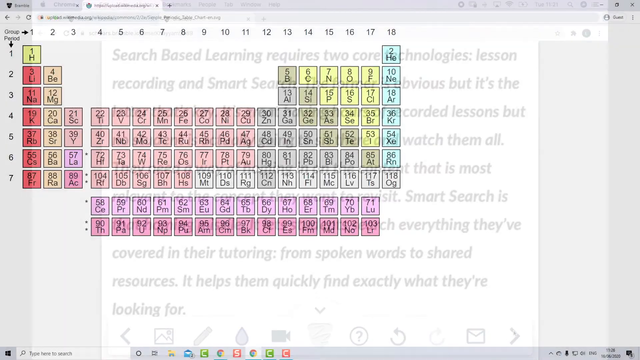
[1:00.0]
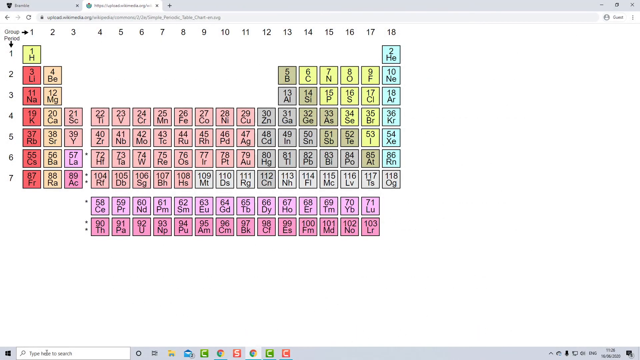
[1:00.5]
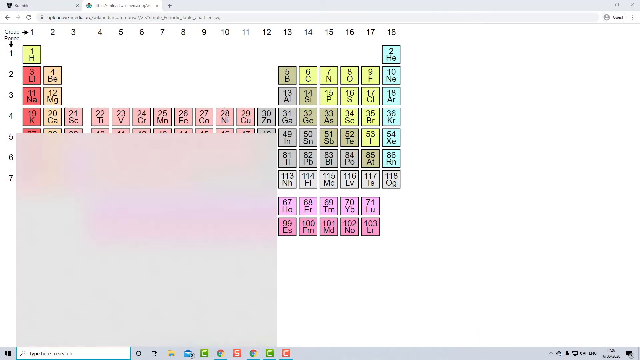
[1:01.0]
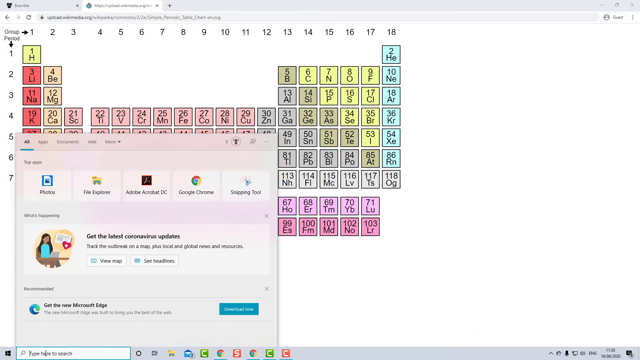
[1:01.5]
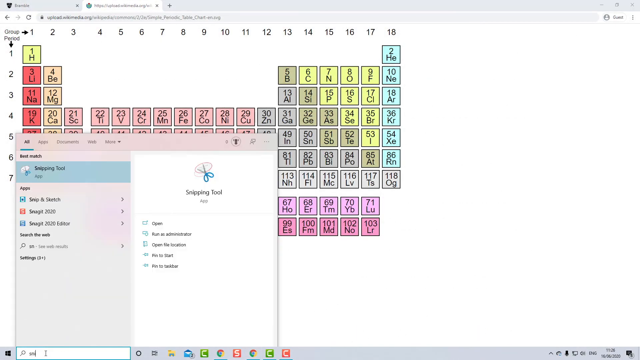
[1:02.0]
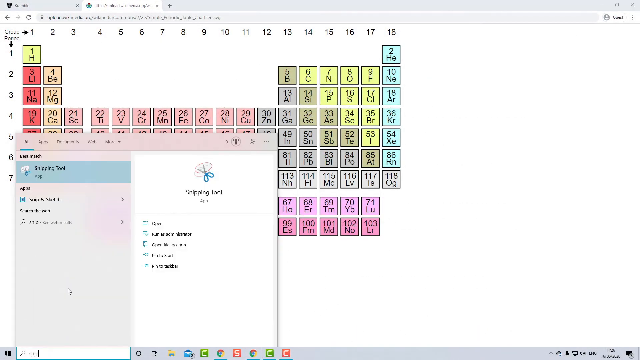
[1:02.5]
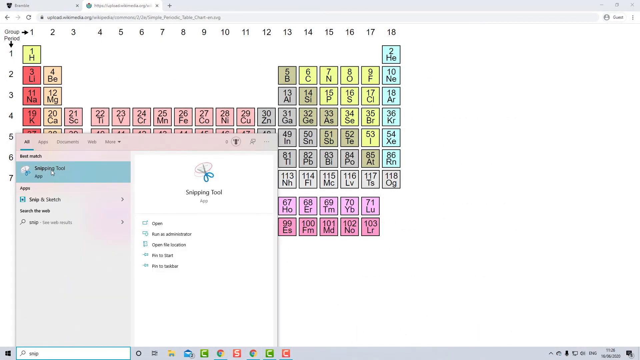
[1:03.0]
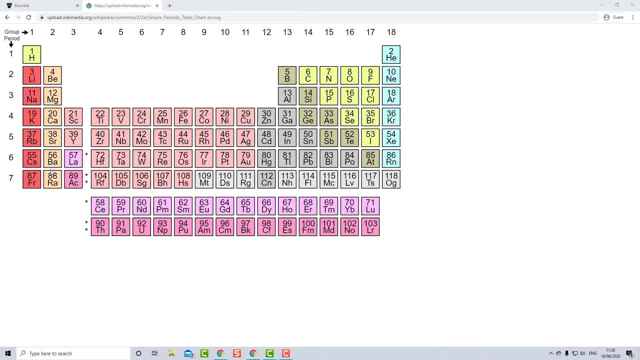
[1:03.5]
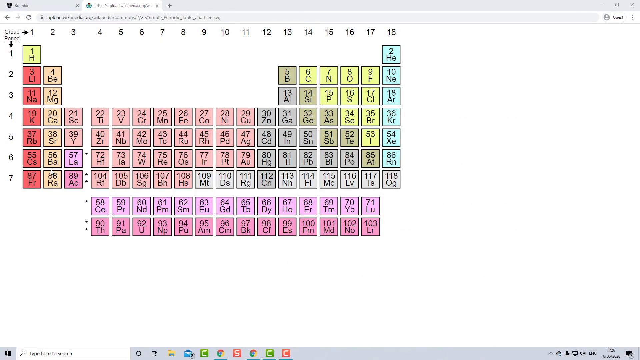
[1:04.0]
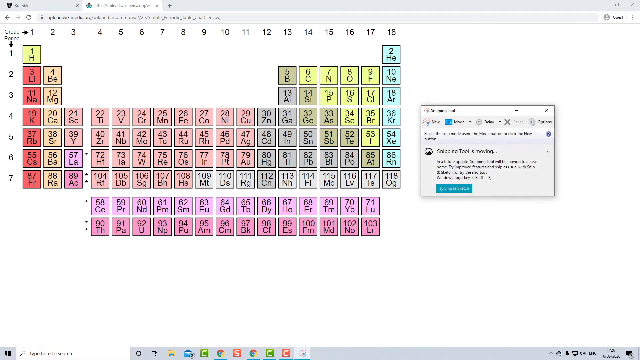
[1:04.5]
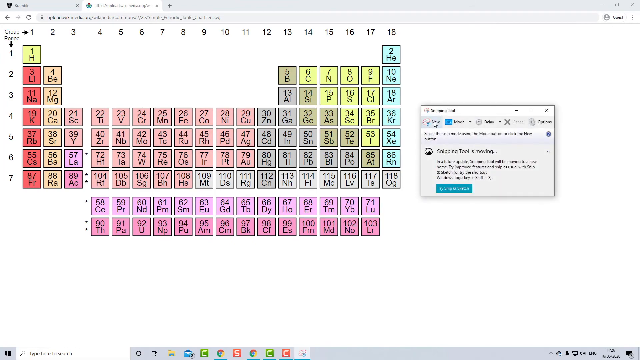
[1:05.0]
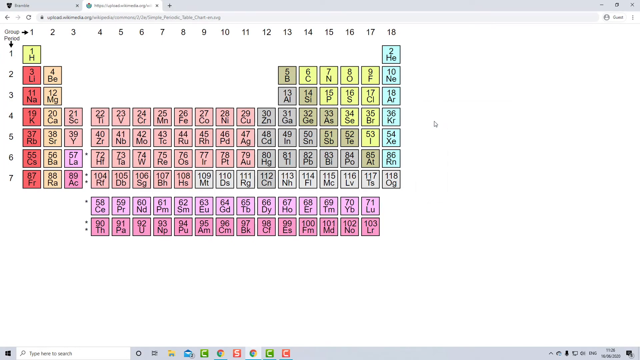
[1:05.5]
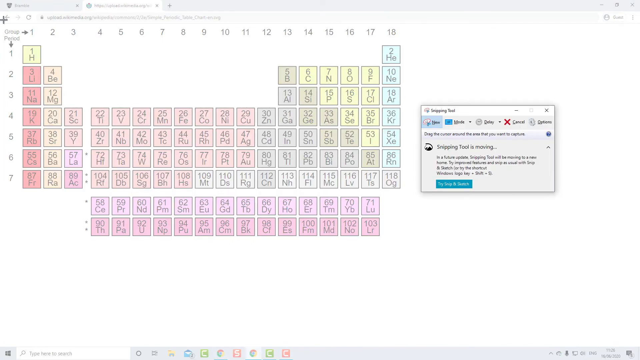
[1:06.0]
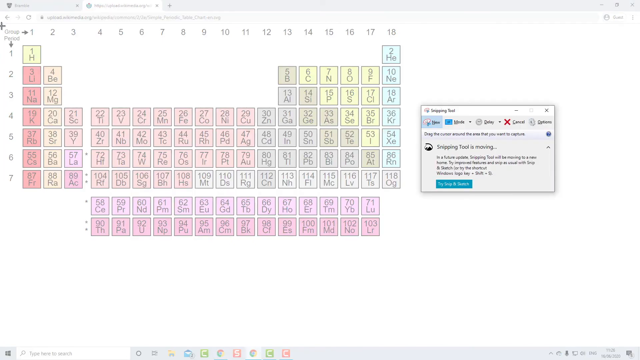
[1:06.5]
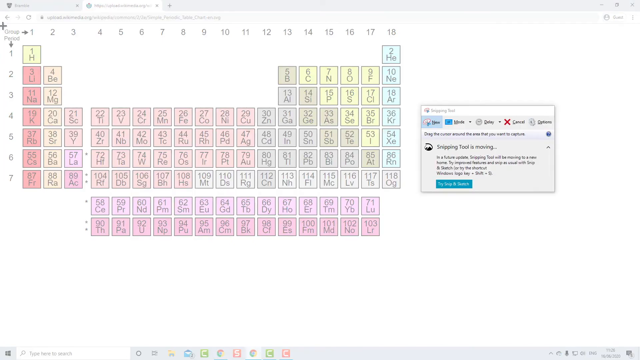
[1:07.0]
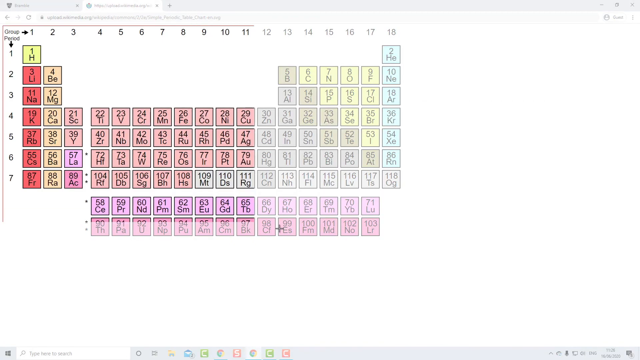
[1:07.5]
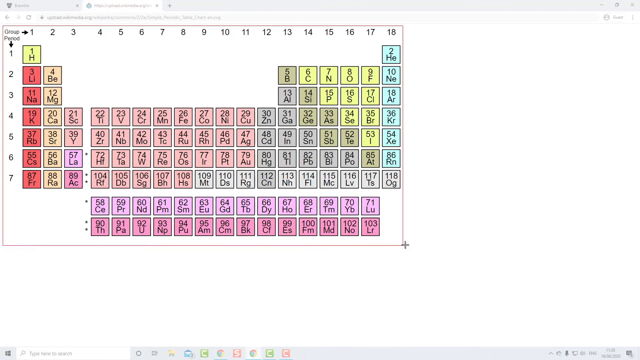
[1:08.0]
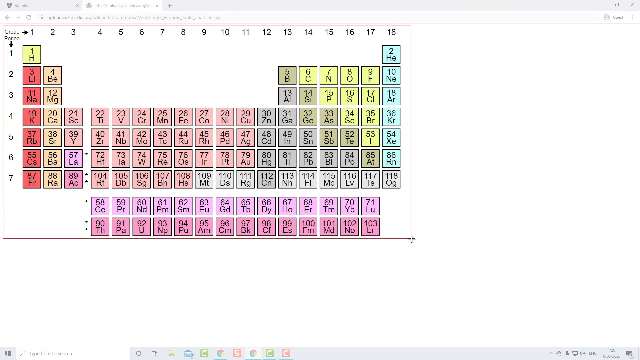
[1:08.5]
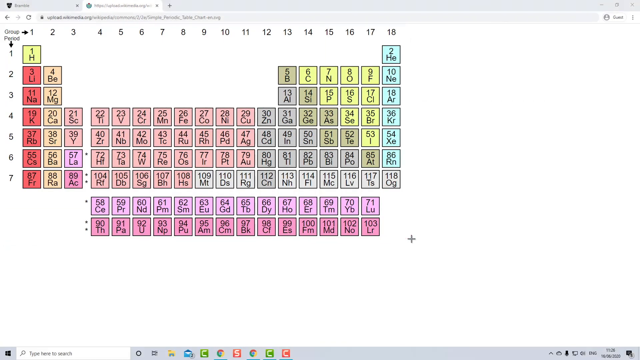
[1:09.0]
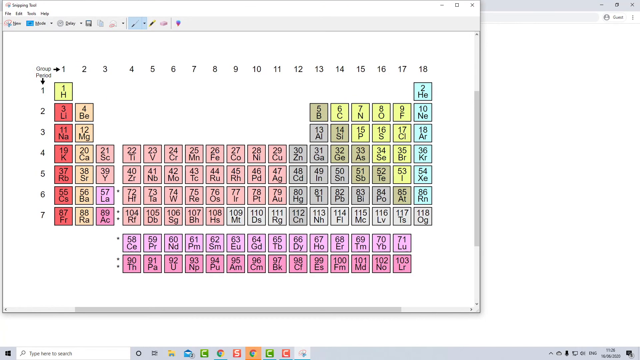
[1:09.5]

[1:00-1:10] A periodic table is shown, along with a platform where the sniping tool is selected. A mini box comes out of the sniping tool, then the box is removed and the periodic table is sniped. After the selection, another window pops up and the video cuts. Nothing is drawn or written, and no hand or marking pen appears; only the sniping of the periodic table is shown.